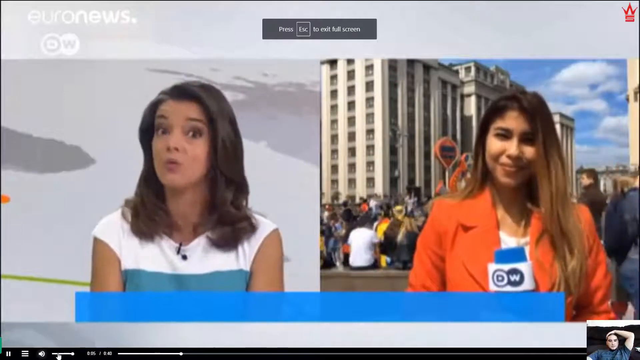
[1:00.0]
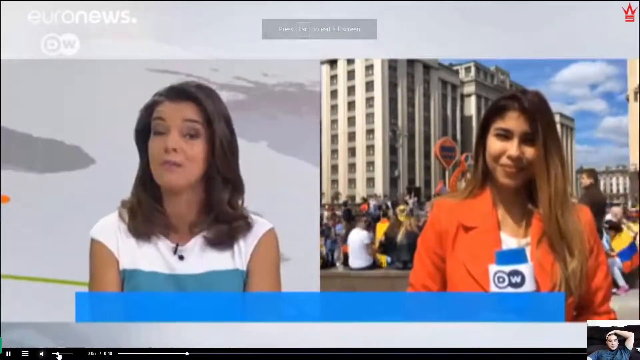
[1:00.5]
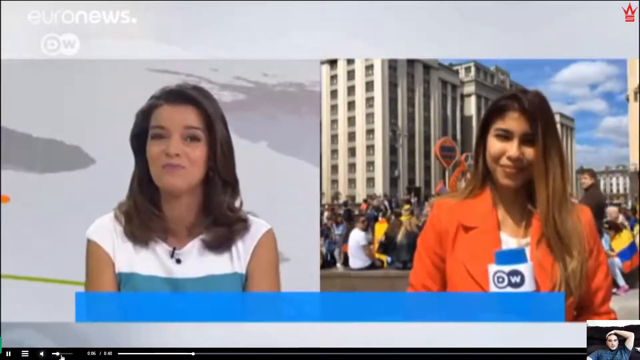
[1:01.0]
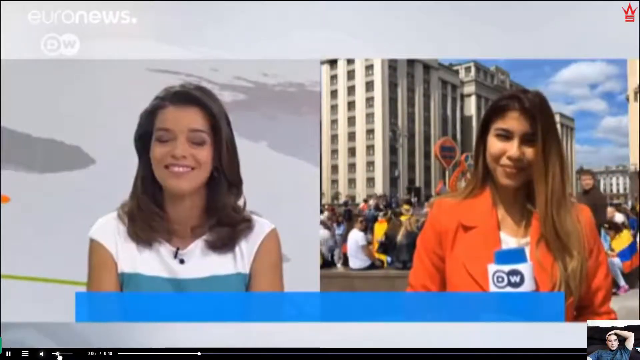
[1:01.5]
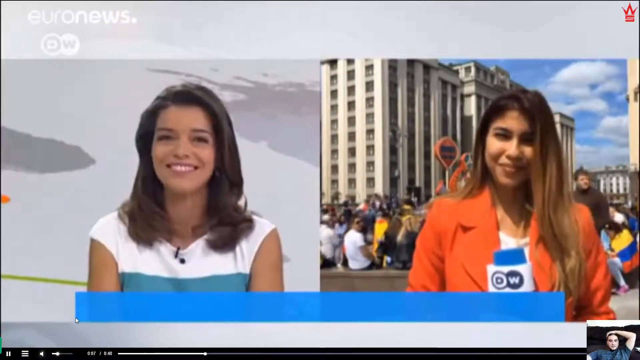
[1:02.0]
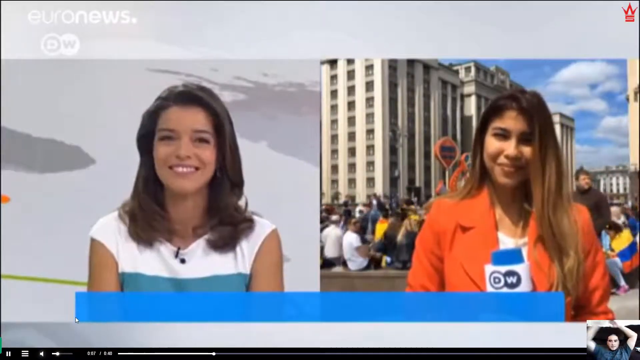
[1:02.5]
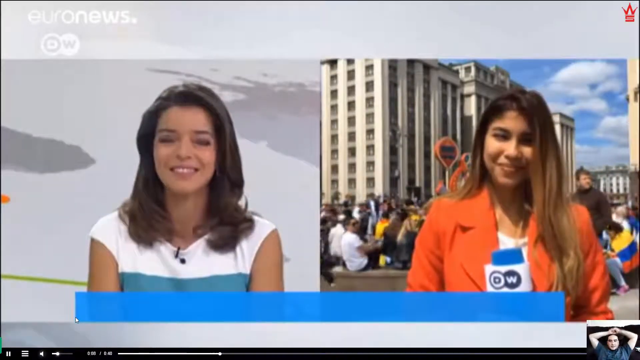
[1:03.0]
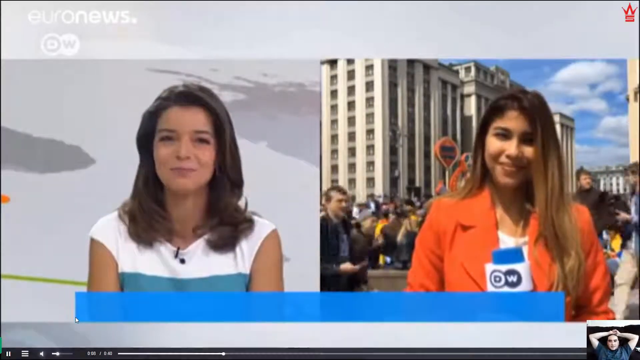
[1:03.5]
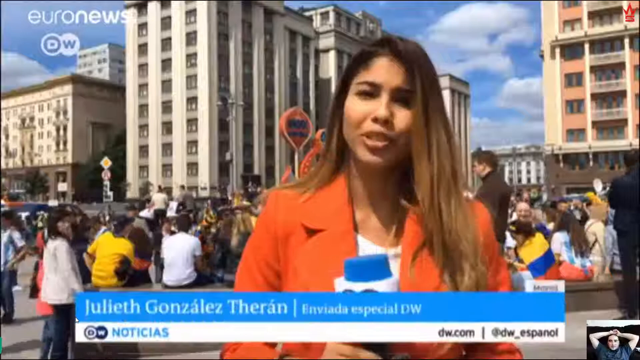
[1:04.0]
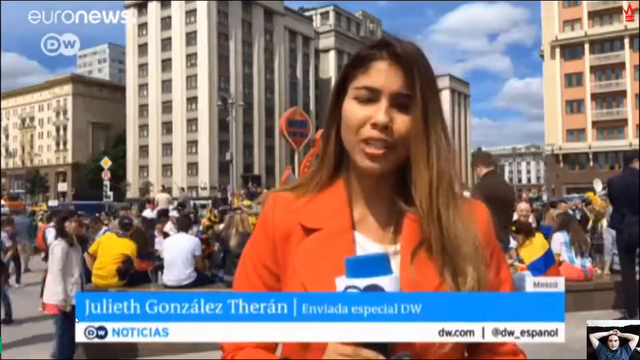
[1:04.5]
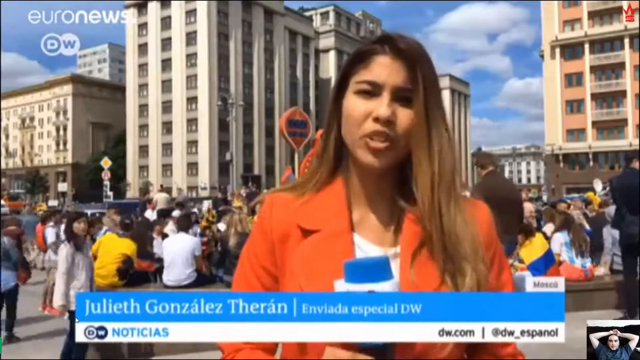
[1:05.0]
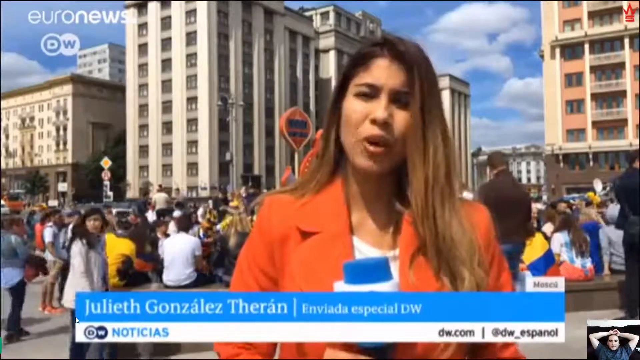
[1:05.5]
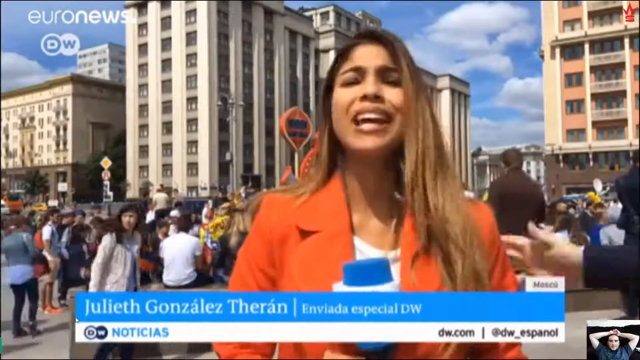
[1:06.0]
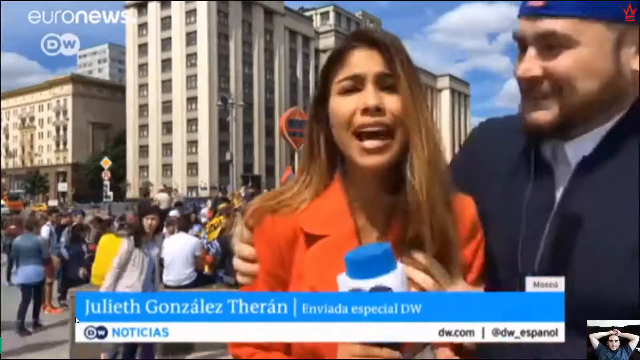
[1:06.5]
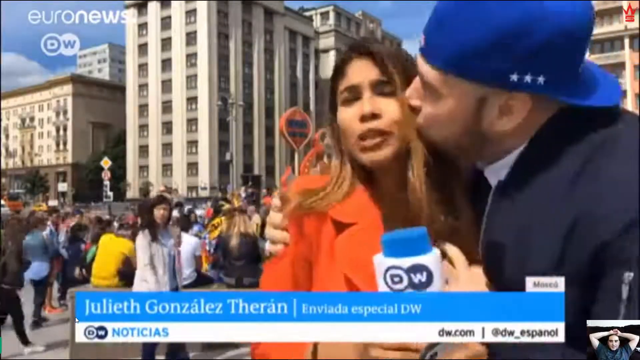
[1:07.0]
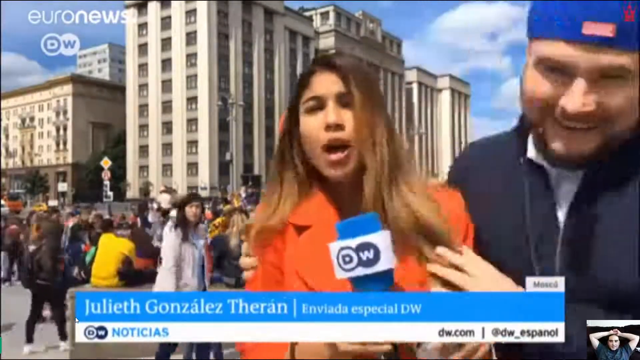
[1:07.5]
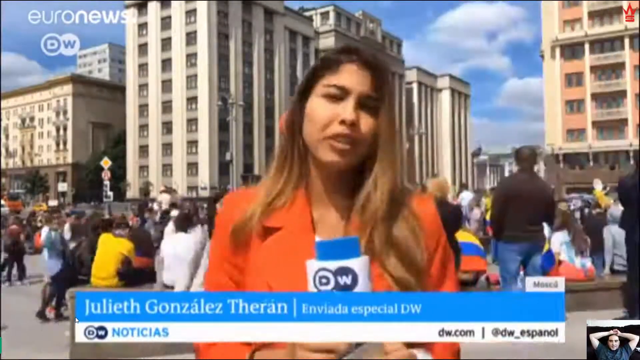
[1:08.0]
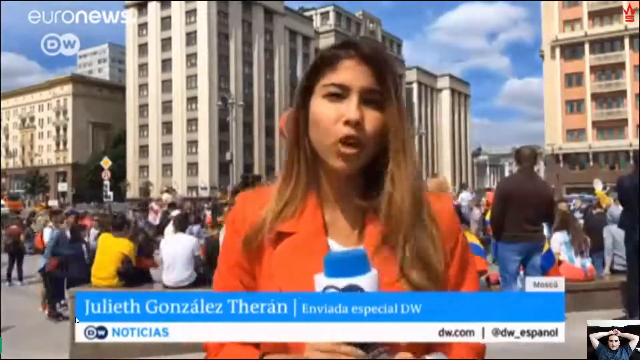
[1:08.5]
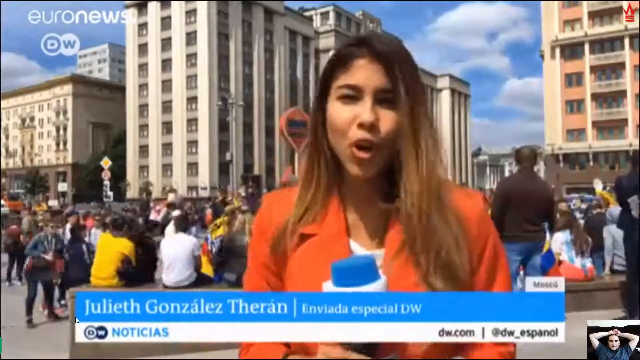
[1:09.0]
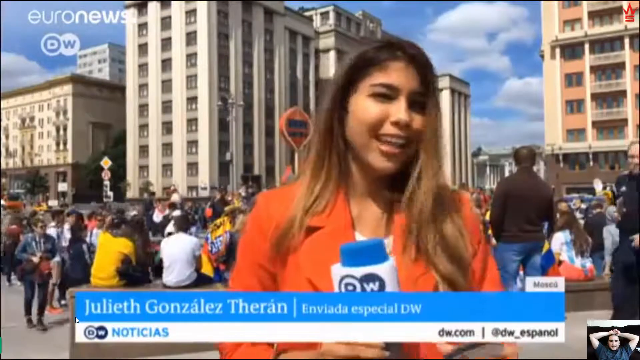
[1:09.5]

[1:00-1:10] Two screens appear side by side. On the left, a Caucasian female reporter with dark hair in a white and green dress reports from a newsroom. On the right, a female reporter with brown hair in an orange blazer and a white shirt reports outside a building. Both reporters are smiling. The video then focuses on the right screen, which covers the whole screen. The reporter in the orange blazer talks facing the camera while lots of people walk around behind her. Suddenly a man wearing a blue cap backwards and a black jacket appears in the frame from the right side, kisses the reporter, and then disappears from the frame. The reporter is unfazed.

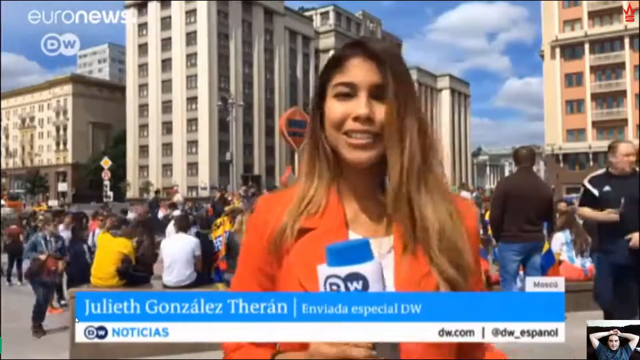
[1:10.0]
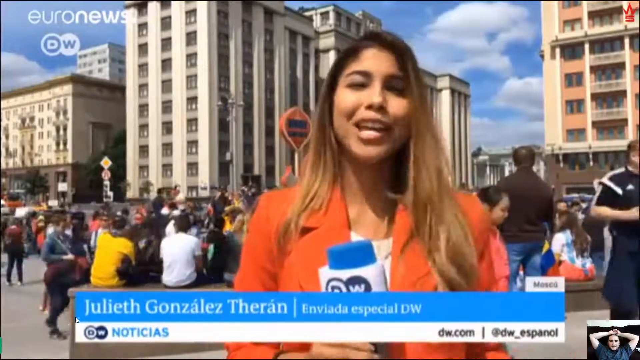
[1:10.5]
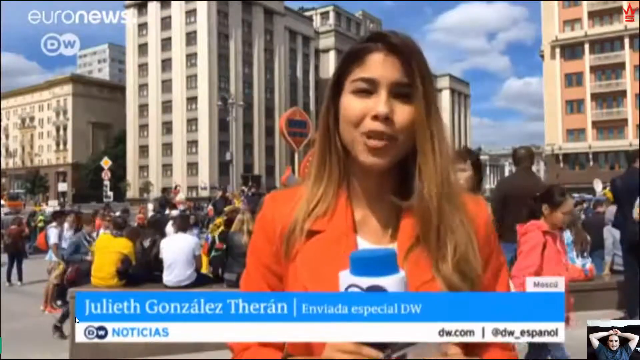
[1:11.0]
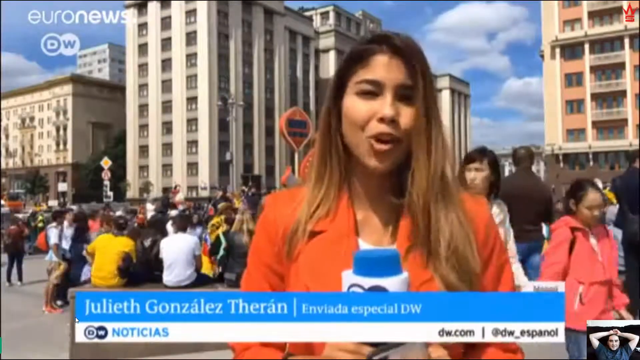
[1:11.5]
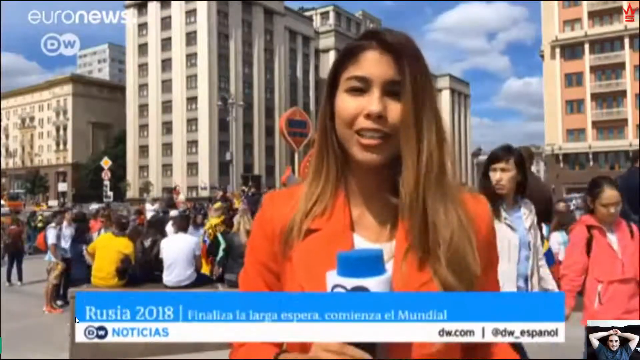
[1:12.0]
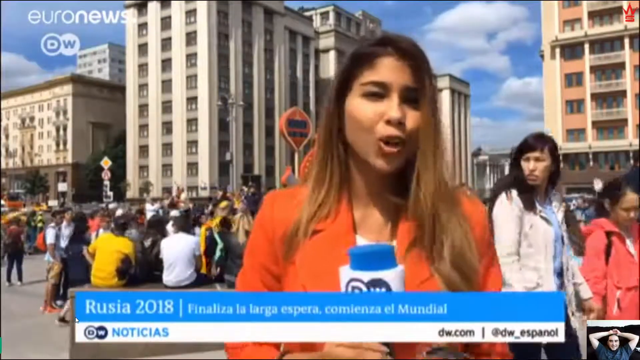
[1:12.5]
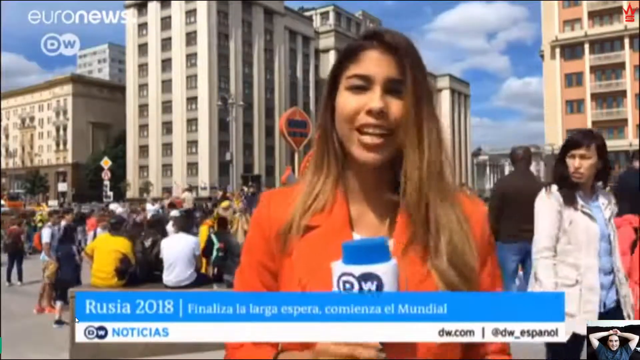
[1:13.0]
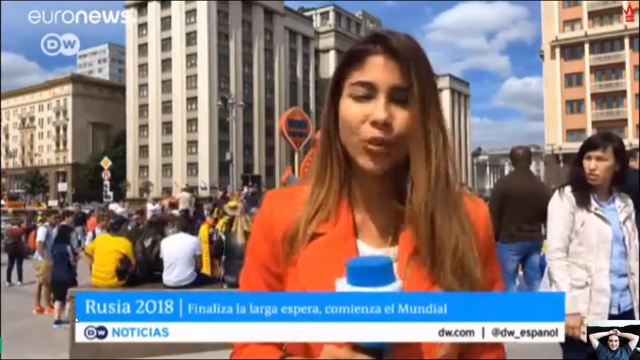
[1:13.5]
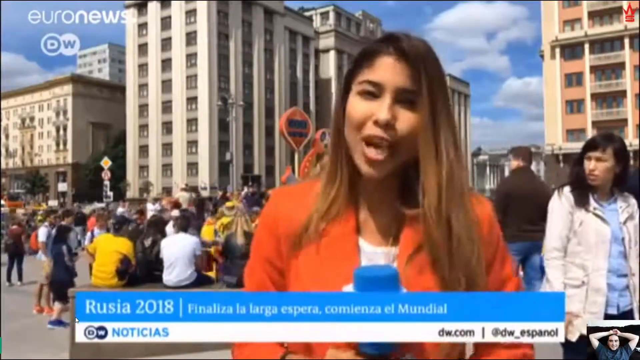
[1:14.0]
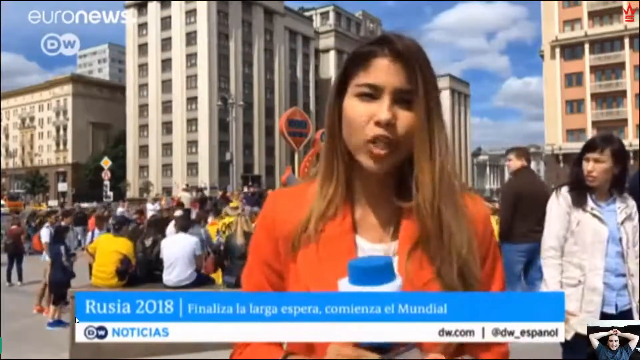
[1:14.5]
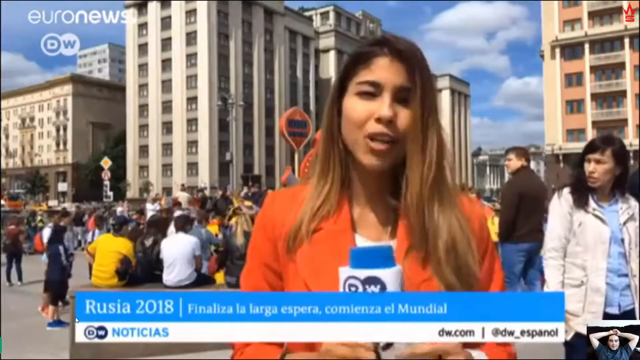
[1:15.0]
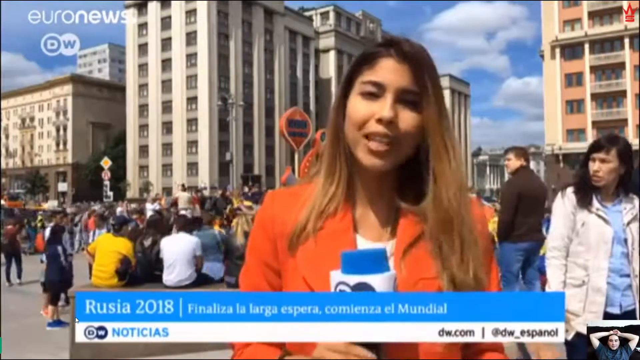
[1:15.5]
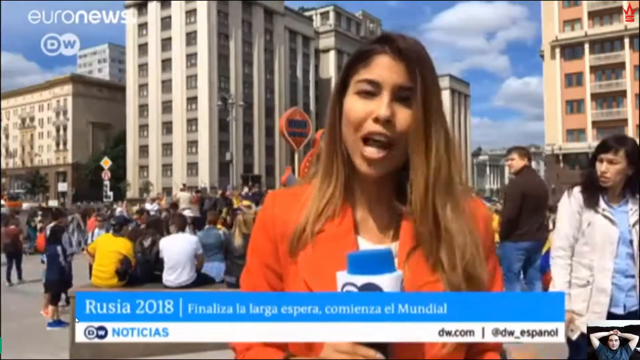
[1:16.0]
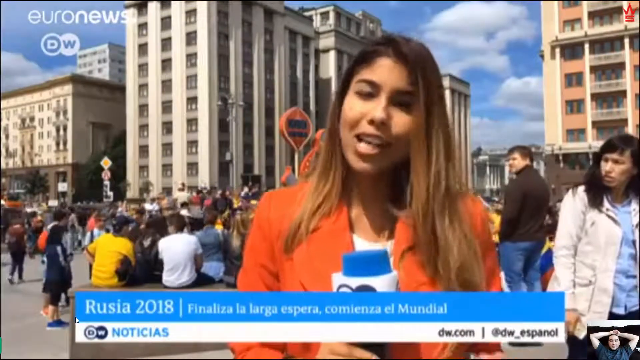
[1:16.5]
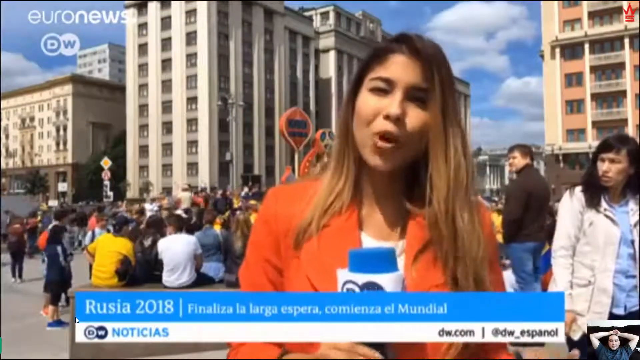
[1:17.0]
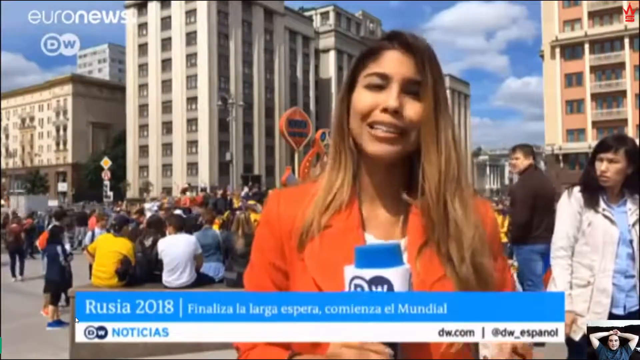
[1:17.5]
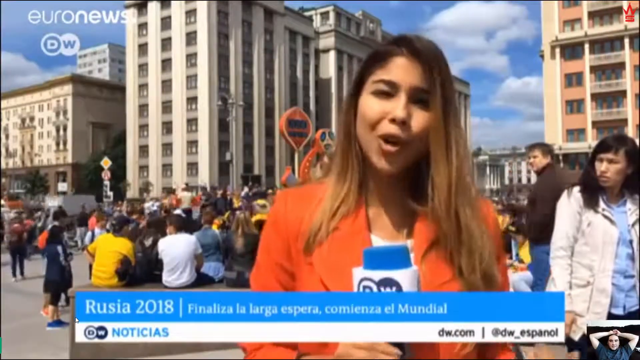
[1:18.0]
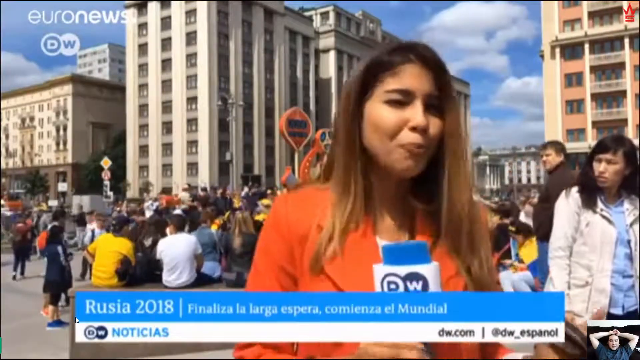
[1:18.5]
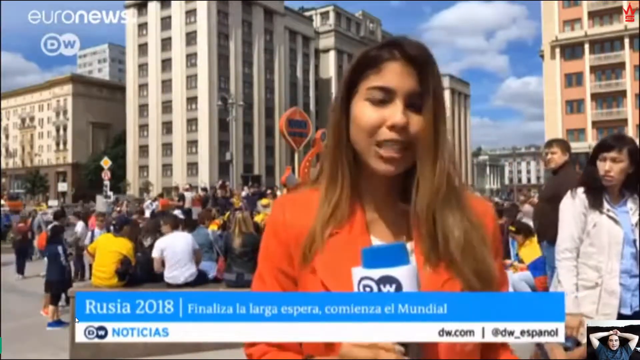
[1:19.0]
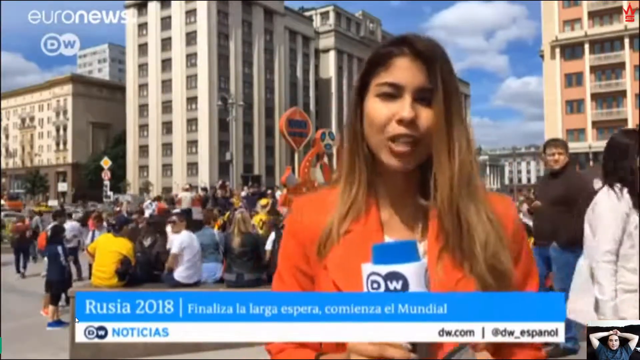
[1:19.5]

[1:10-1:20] The Hispanic female reporter, with black and brown hair, wears an orange blazer and a white shirt. She reports for a news channel, holding a white and blue microphone and talking while looking straight at the camera. Behind her are tall buildings and lots of people, some seated, some standing and some walking by. Her name is Julieth Gonzalez-Theran. Behind her to the right, a taller woman with black hair in a white jacket and a shorter woman with dark hair in a pink jacket walk past her and disappear from the frame. The sky is blue with some white clouds.